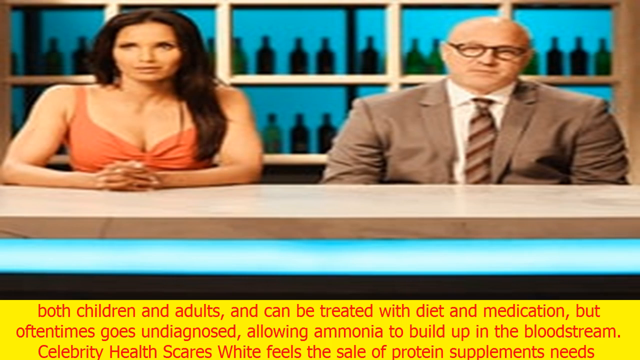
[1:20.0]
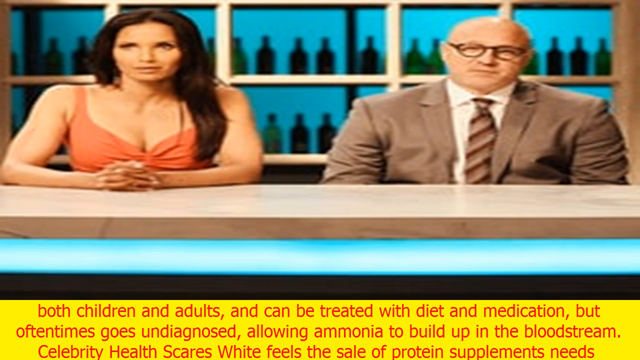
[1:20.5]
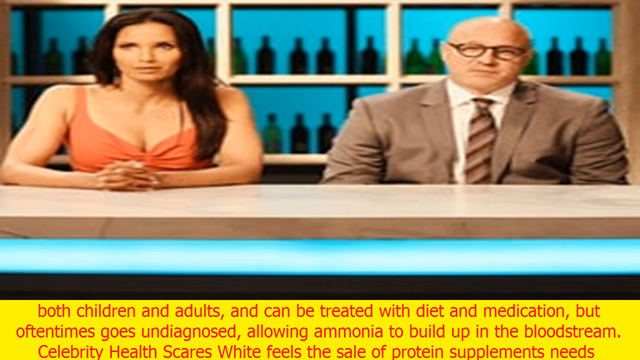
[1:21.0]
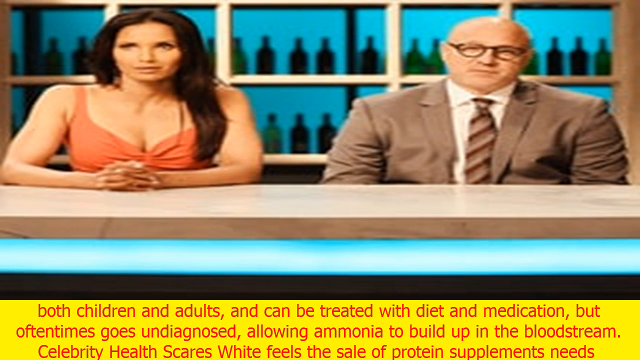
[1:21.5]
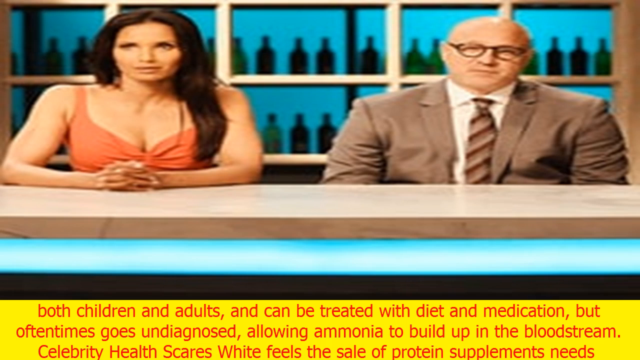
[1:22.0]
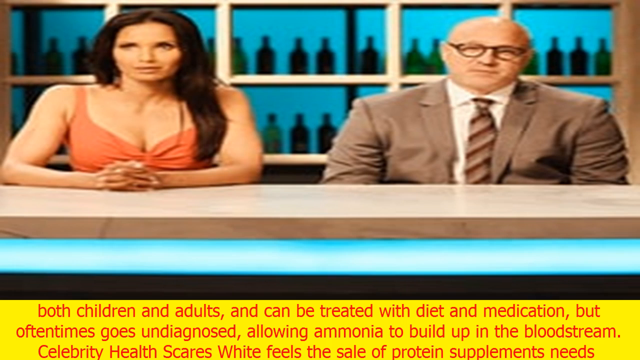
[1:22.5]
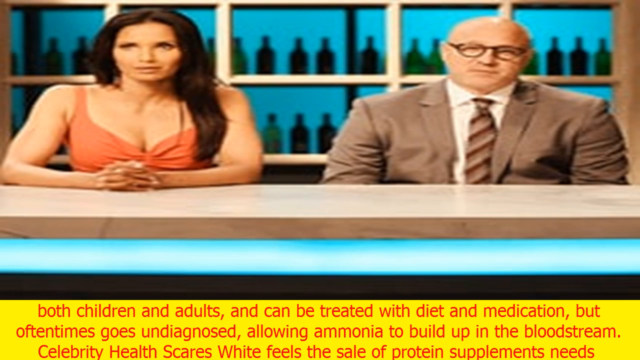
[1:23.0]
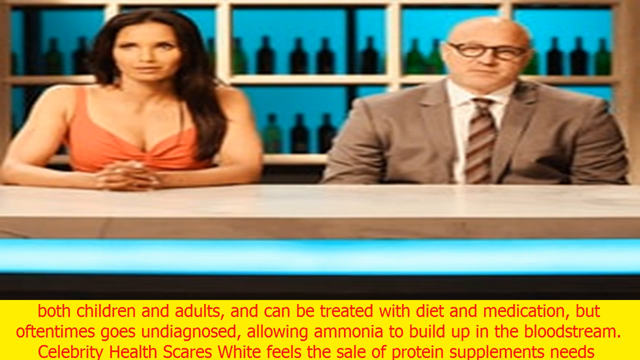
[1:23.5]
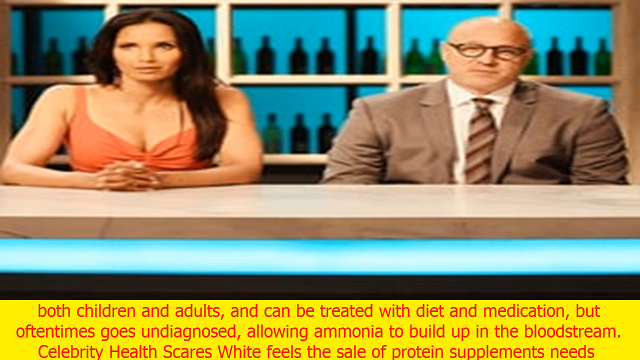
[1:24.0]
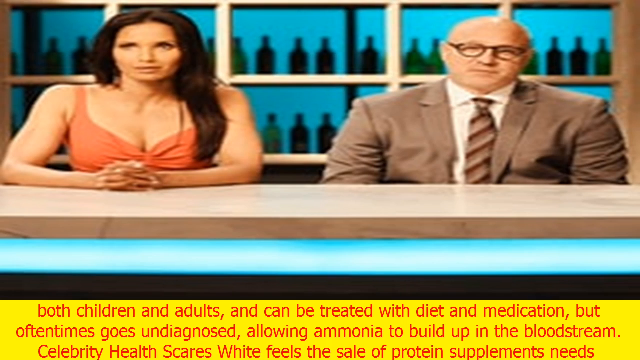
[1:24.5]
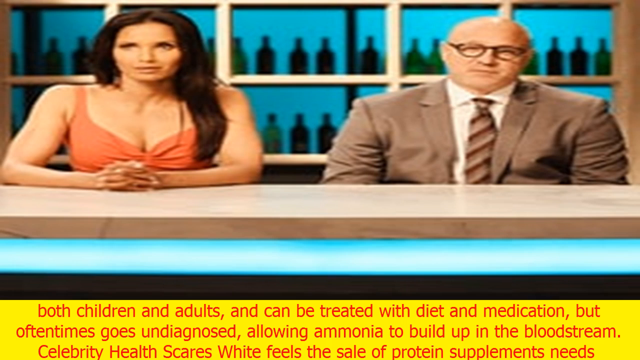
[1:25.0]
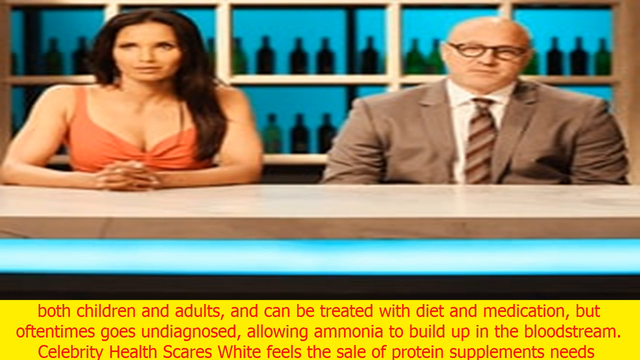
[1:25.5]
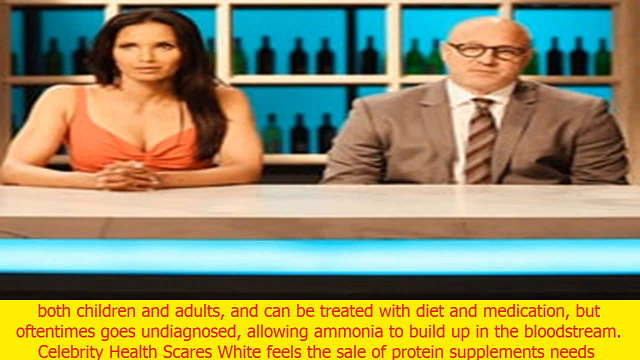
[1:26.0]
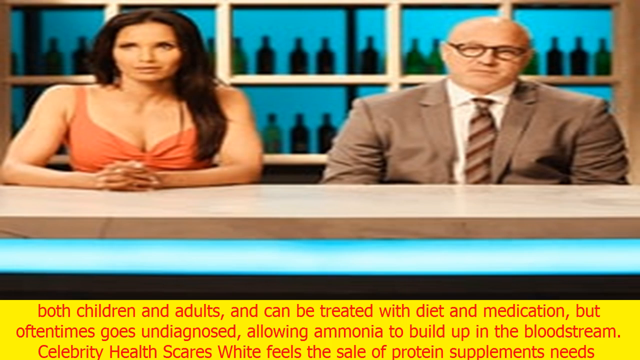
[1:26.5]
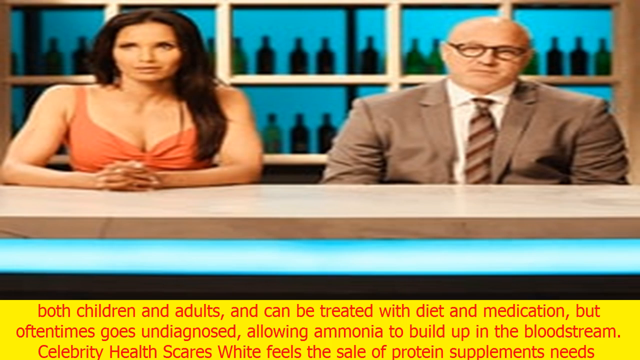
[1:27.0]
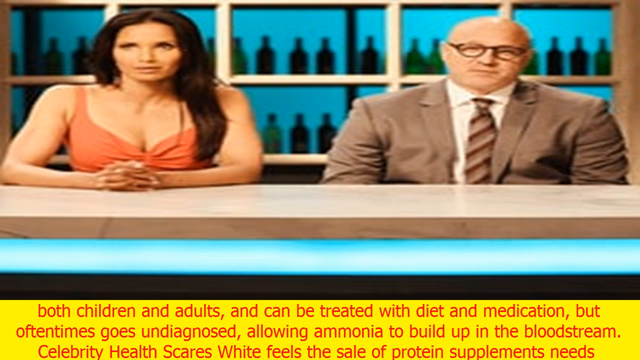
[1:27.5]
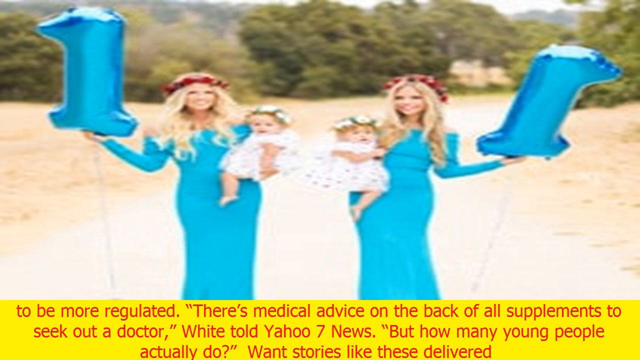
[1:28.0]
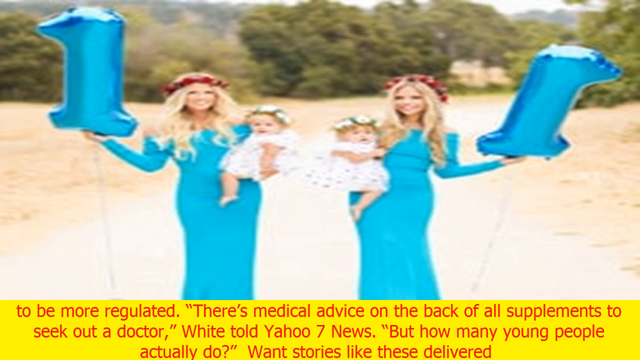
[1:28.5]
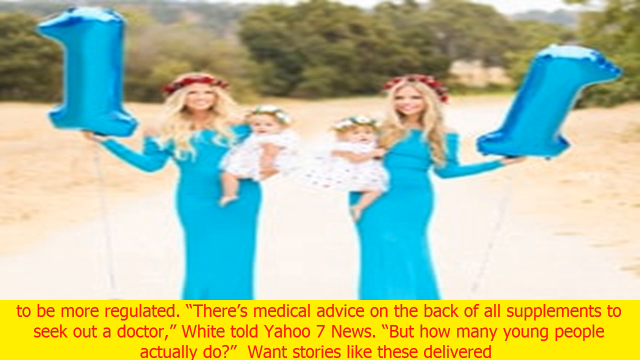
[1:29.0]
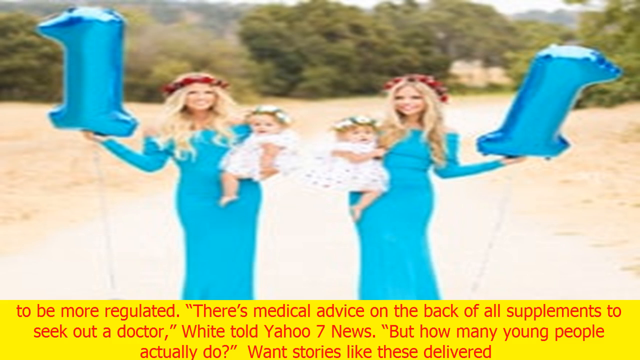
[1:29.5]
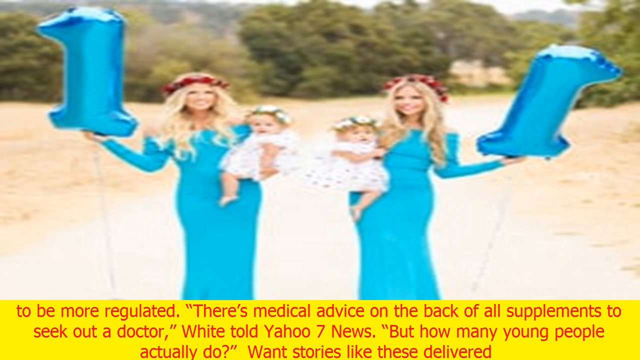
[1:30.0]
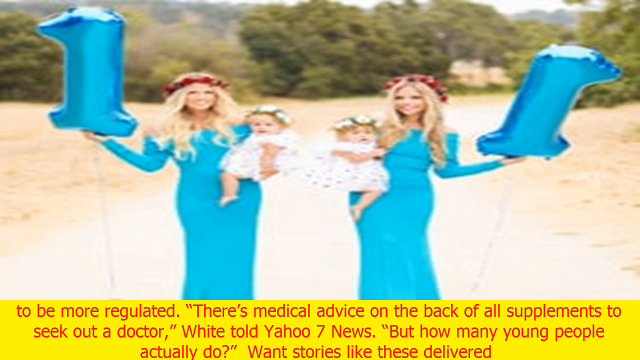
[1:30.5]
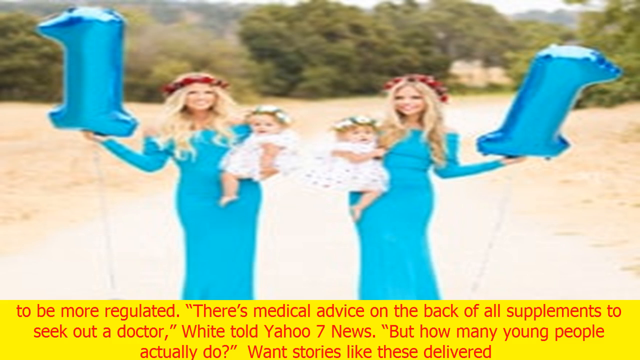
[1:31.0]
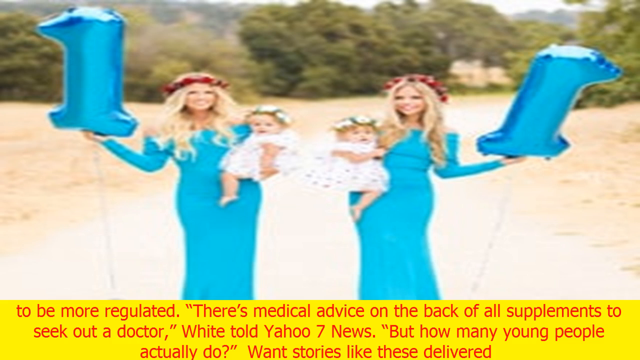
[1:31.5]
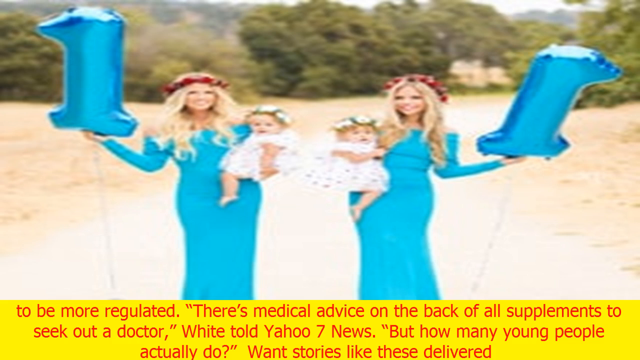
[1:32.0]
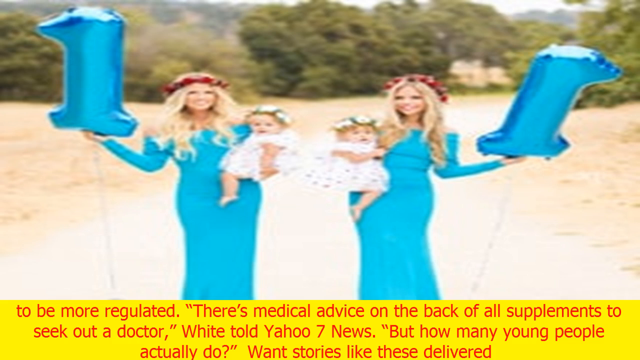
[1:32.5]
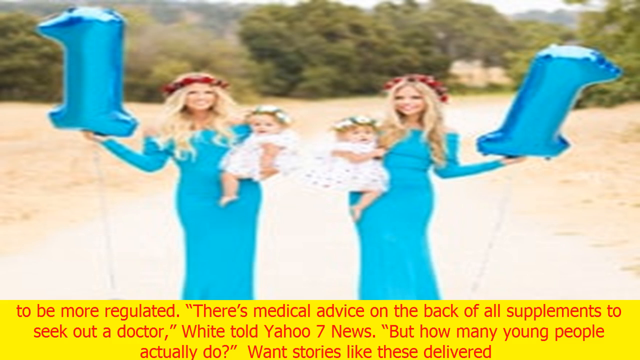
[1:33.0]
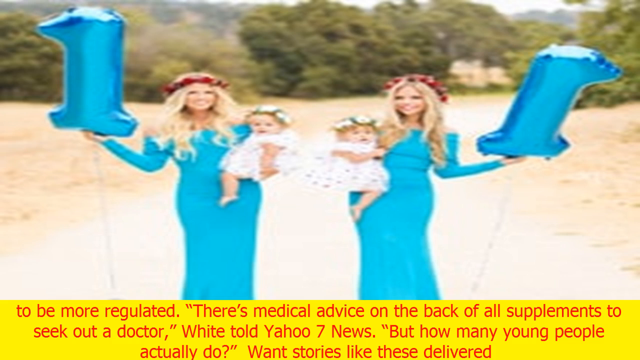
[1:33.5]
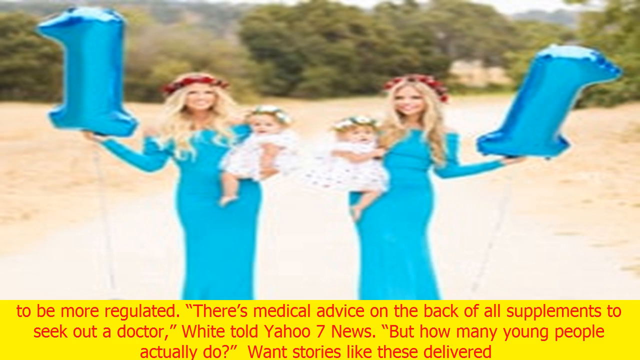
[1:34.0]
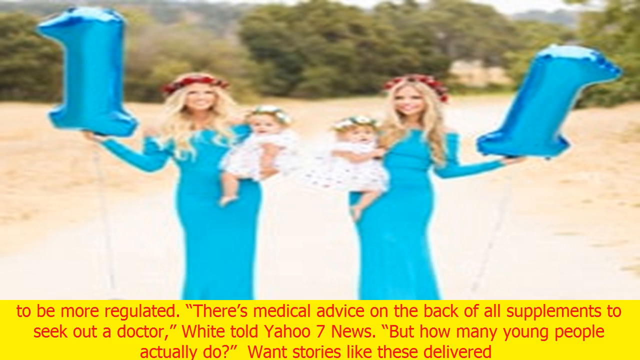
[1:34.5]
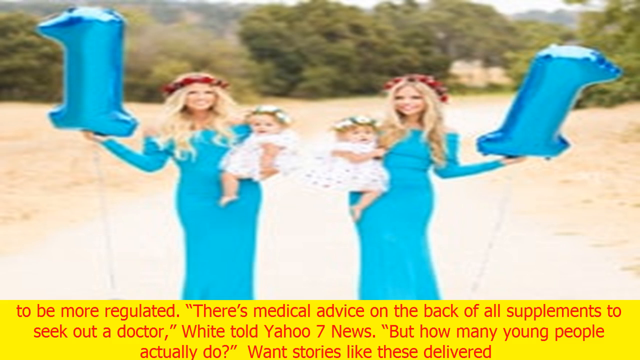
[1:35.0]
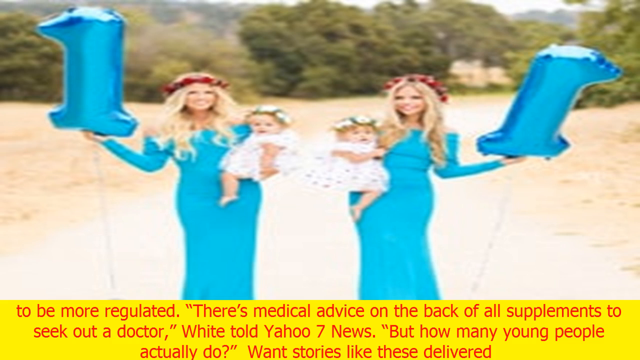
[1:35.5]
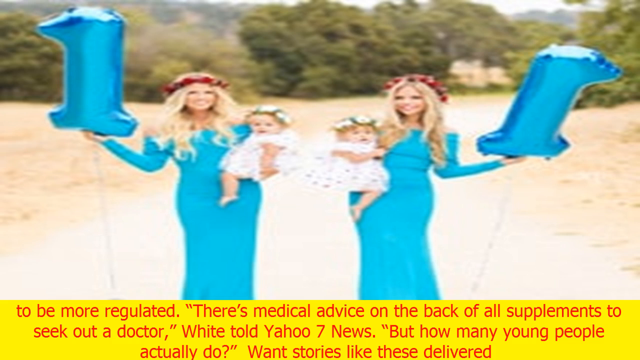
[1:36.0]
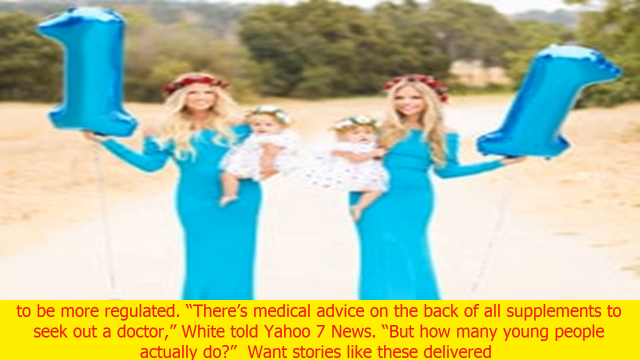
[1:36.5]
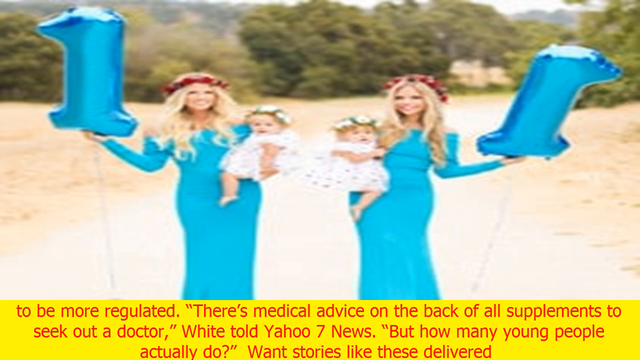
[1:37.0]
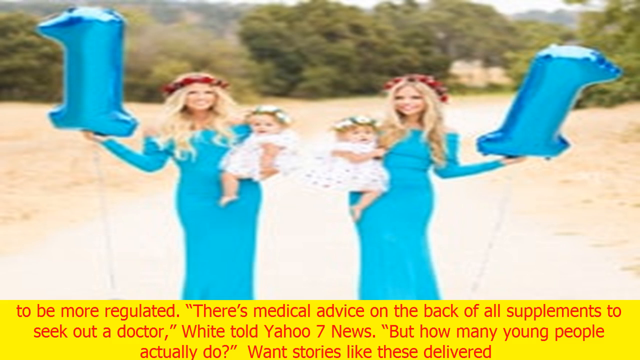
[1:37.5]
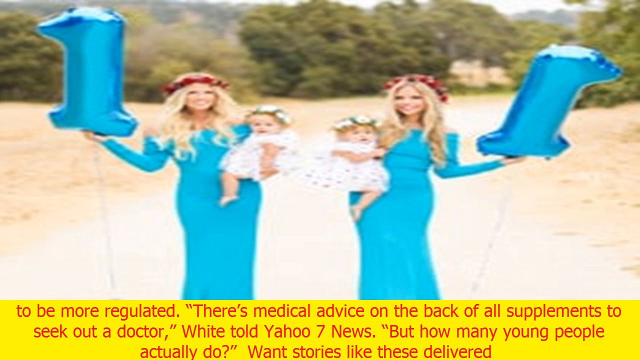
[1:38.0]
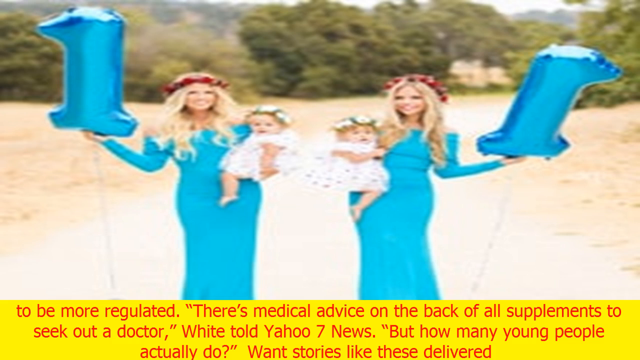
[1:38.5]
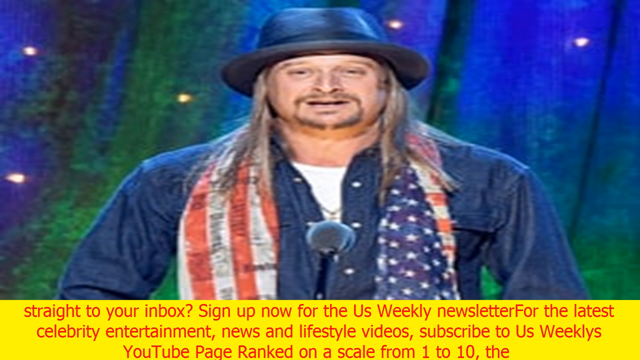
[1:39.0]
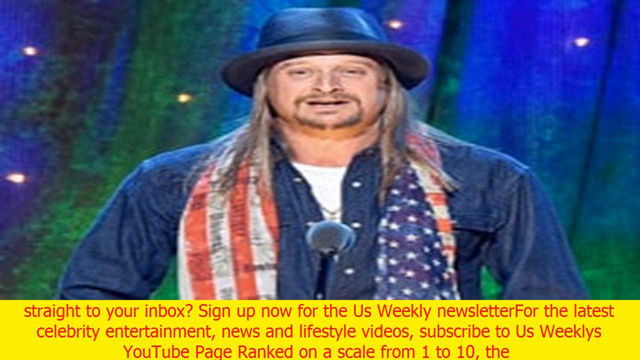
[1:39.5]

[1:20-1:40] The man and woman, dressed very elegantly, sit at a table with a lot of bottles at their shoulders. Another image shows two twins holding two children who have probably just turned one year old. Superimposed text continues the information about the woman who died from a protein overdose, written in red on a yellow bar. Finally, a white man appears with a hat like Michael Jackson's, a jeans shirt, an American scarf, long hair and a beard, speaking into a microphone. He is probably a television personality and possibly was diagnosed with the same syndrome.